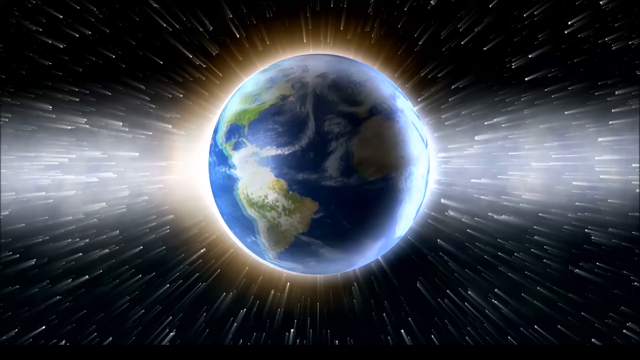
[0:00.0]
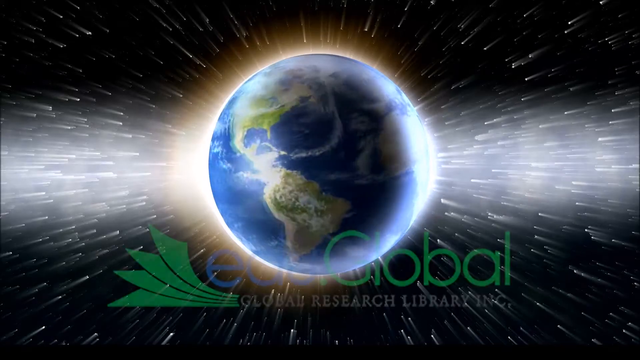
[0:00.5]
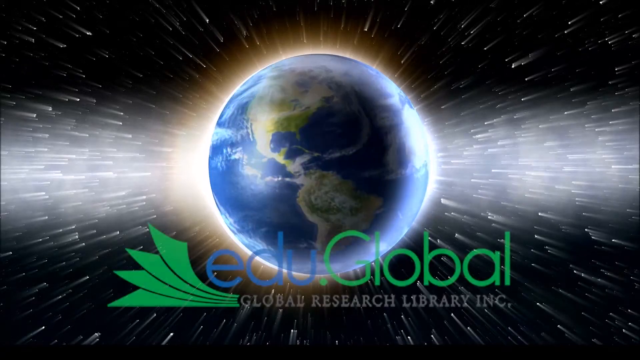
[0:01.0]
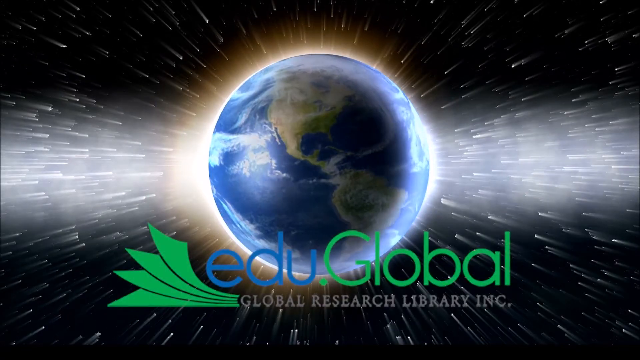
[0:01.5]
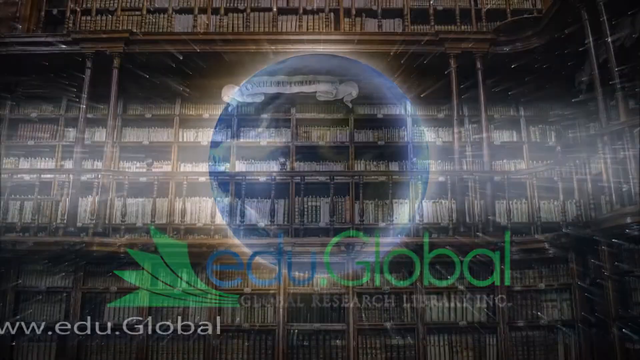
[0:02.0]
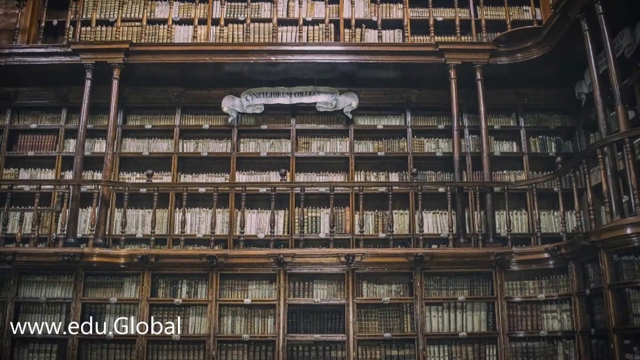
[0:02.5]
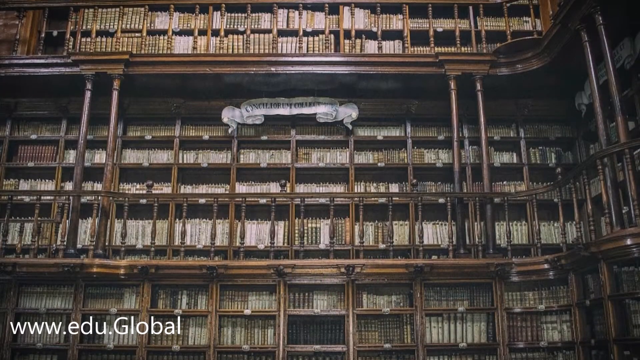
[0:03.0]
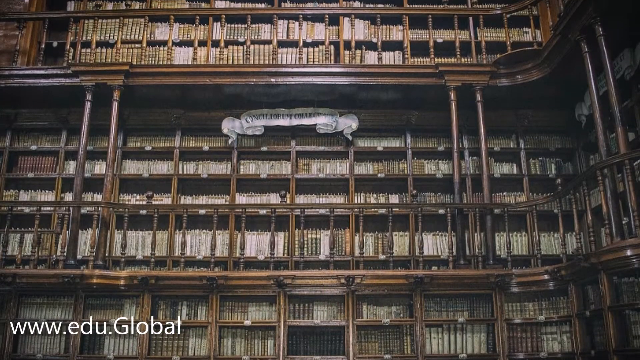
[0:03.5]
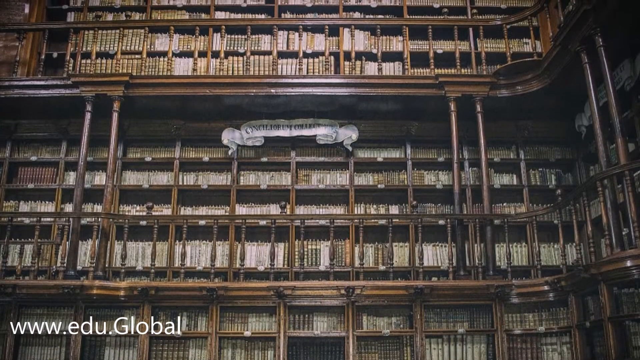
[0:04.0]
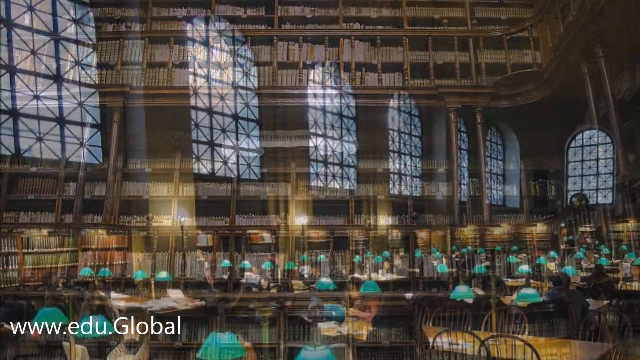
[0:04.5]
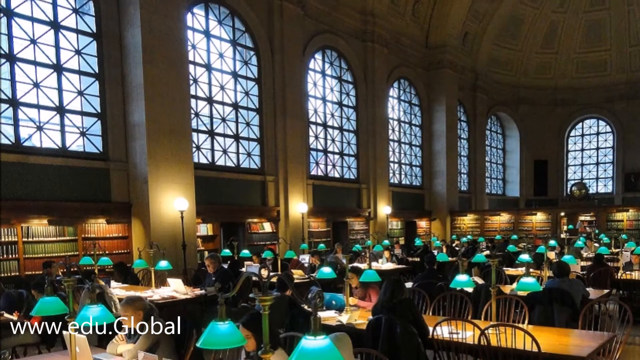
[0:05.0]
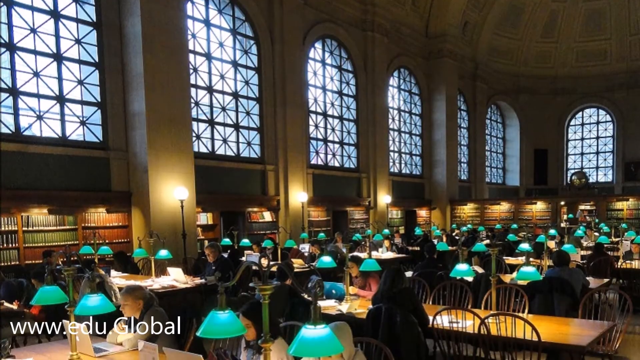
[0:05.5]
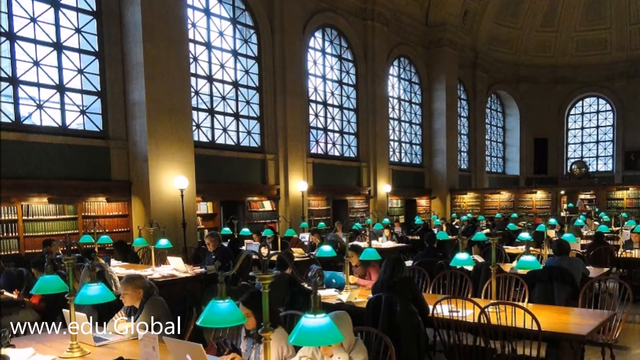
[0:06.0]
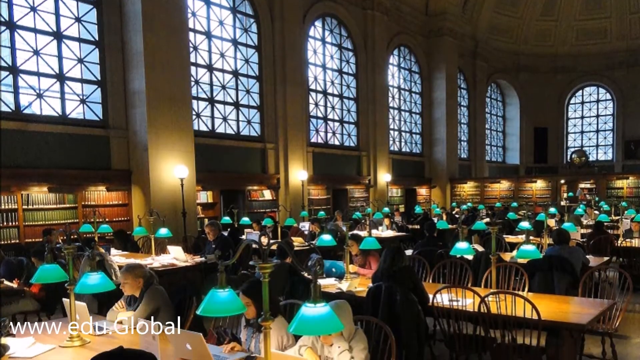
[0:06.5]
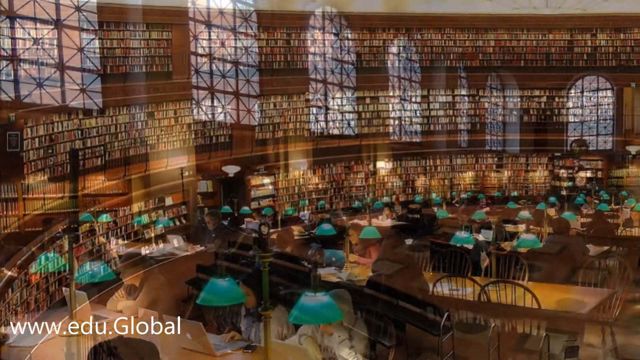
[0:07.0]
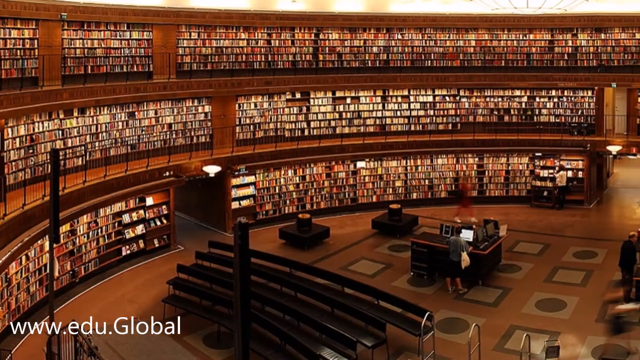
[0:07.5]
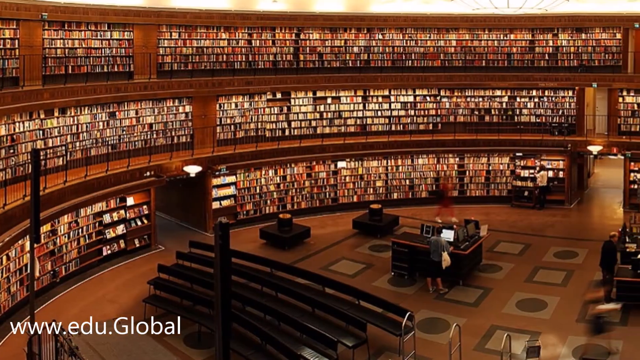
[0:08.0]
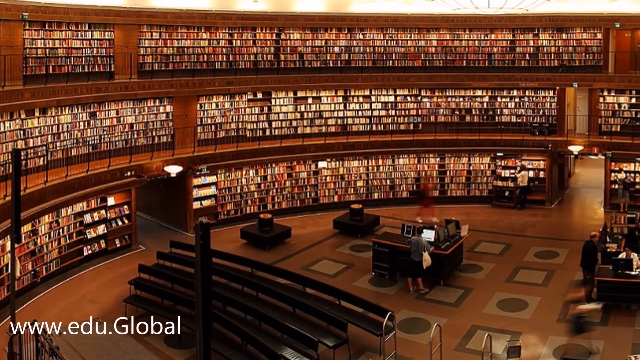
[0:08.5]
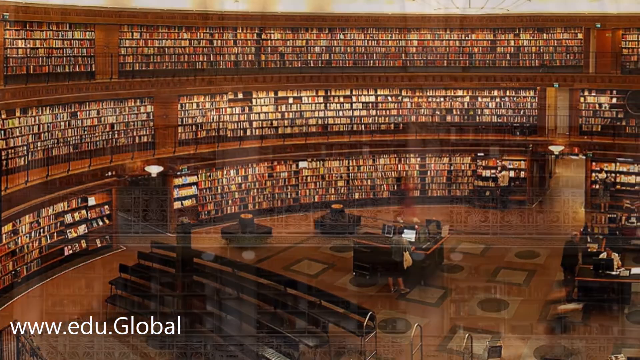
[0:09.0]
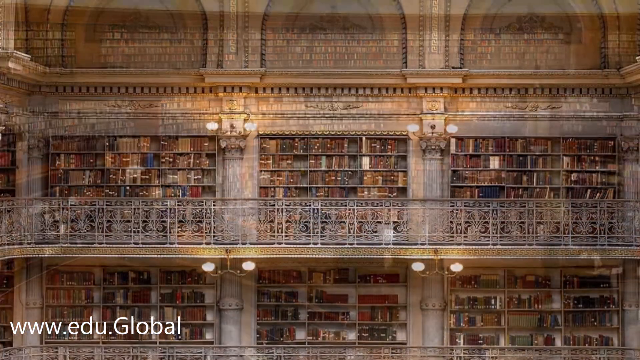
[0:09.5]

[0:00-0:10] The video opens with an introduction, possibly created by a bookstore judging by the name on screen: in front of planet Earth rotating on its own axis, text reads "Edu Global, Global Research Library Inc." Next comes an image of a very large bookstore with an antique look, full of books, looking clean and elegant. Another image shows dozens of tables with lamps where people sit reading books, in the middle of several shelves also full of books, illuminated by a few lights on the wall. Finally, an even larger, circular bookstore appears, with three floors full of shelves of books.